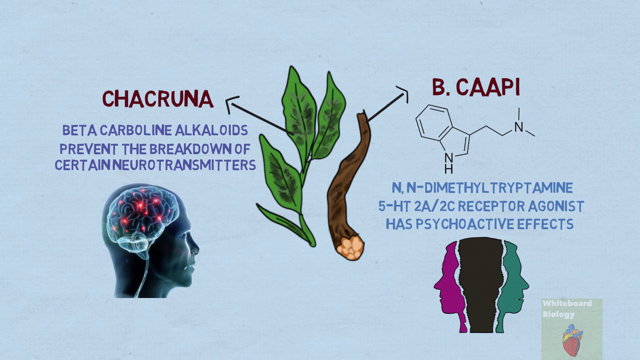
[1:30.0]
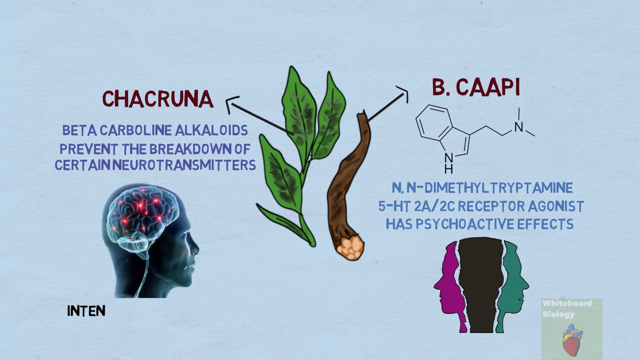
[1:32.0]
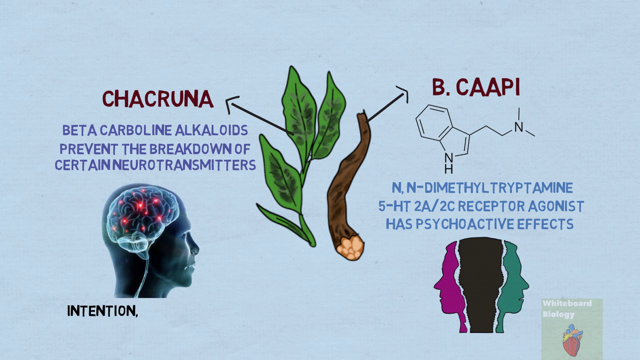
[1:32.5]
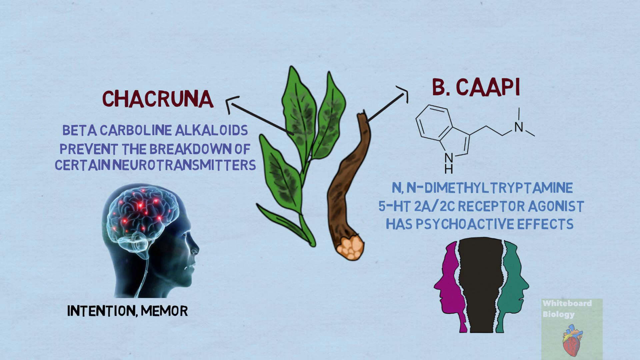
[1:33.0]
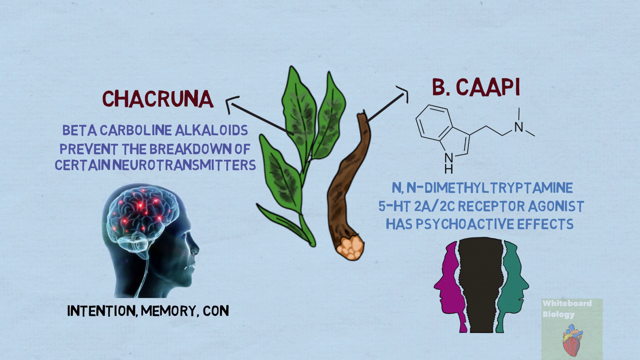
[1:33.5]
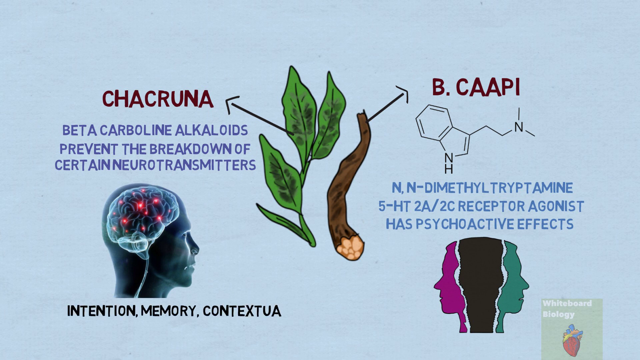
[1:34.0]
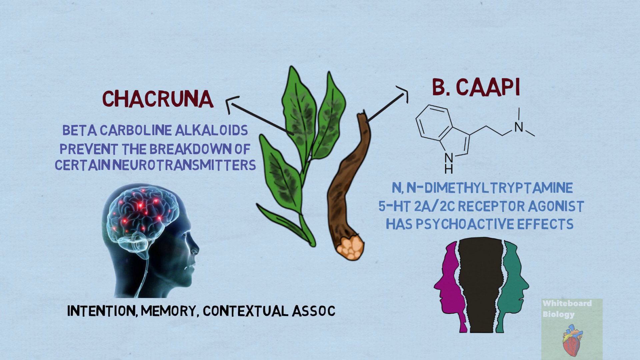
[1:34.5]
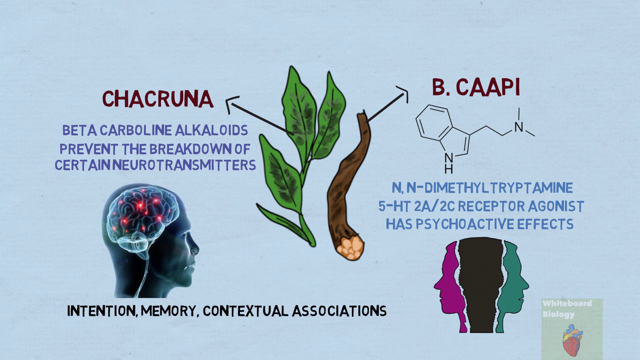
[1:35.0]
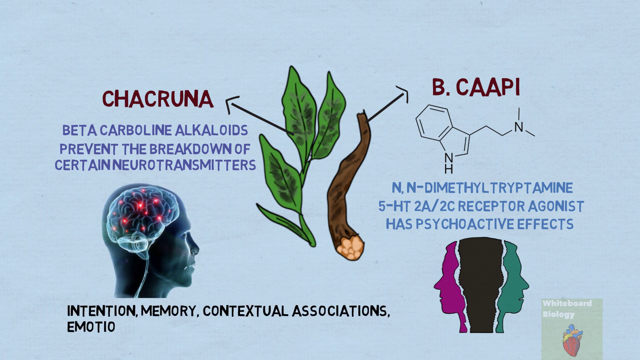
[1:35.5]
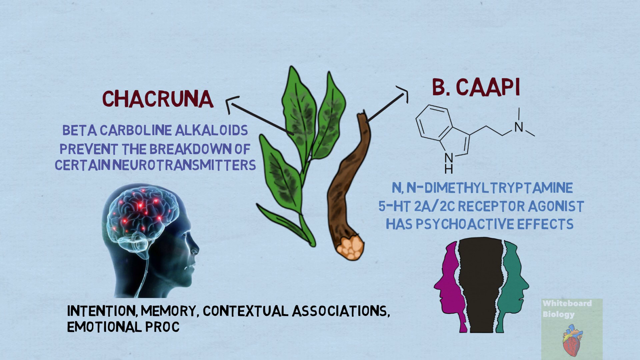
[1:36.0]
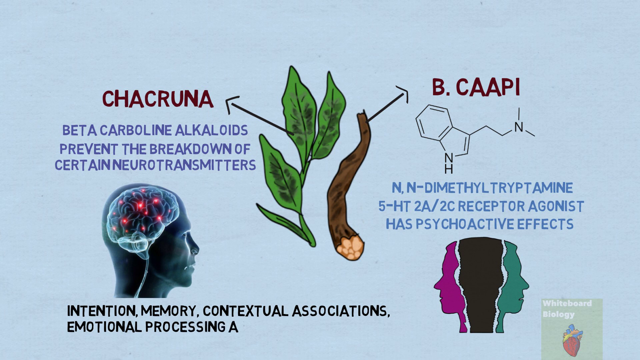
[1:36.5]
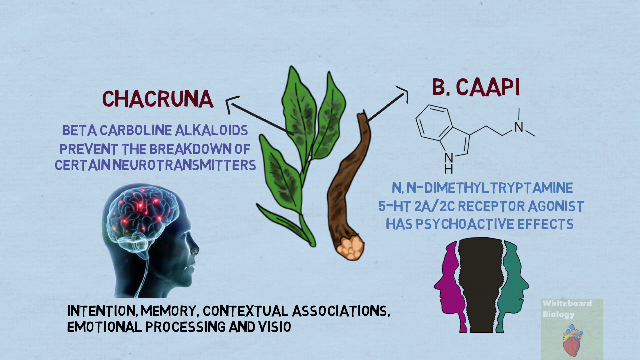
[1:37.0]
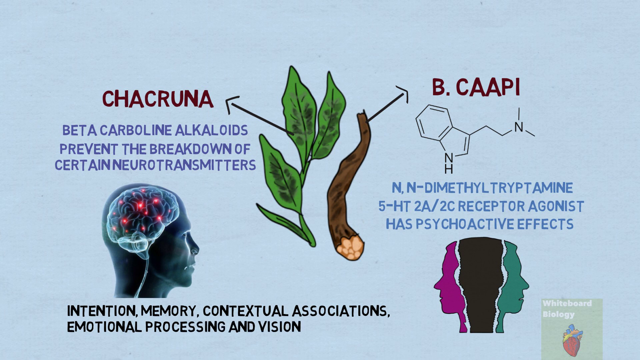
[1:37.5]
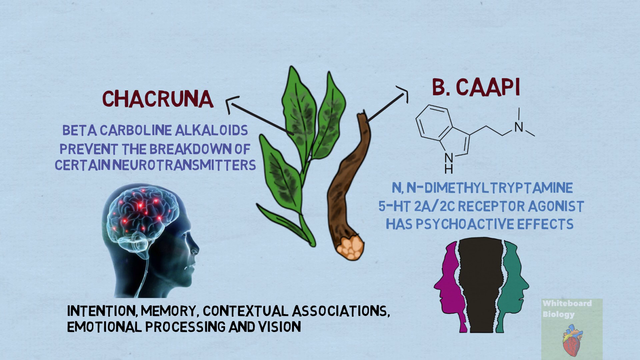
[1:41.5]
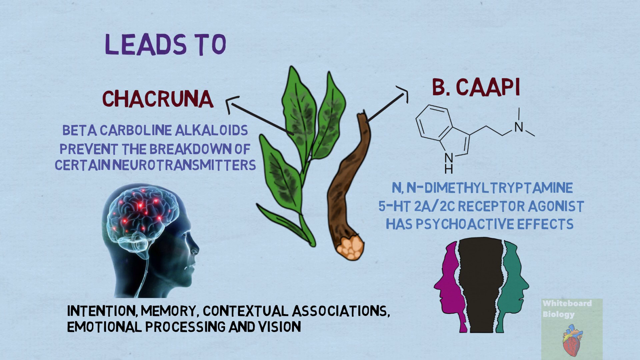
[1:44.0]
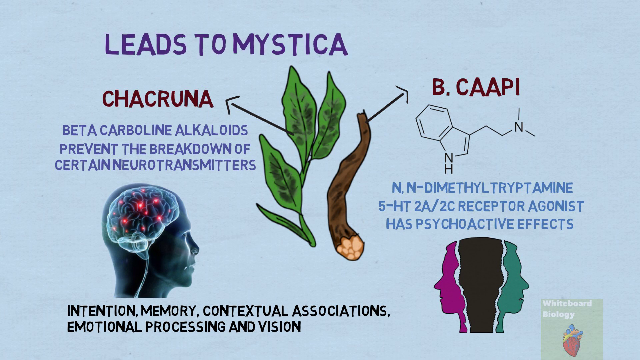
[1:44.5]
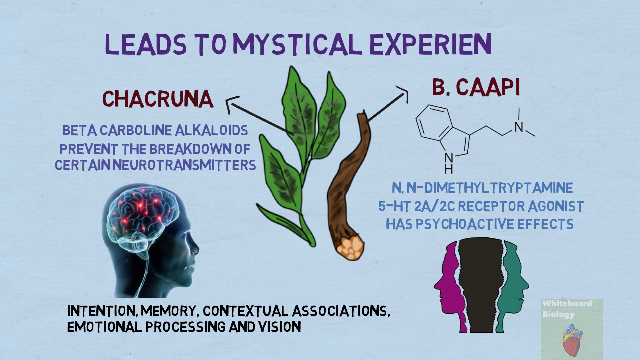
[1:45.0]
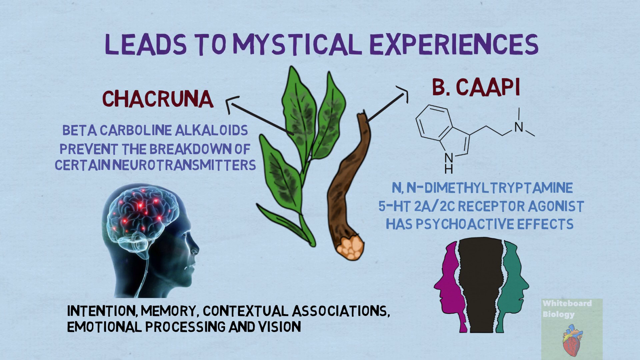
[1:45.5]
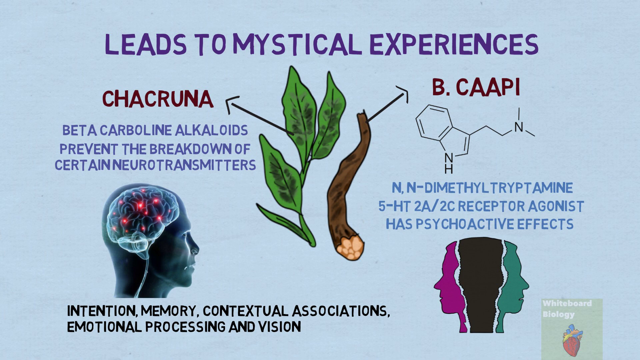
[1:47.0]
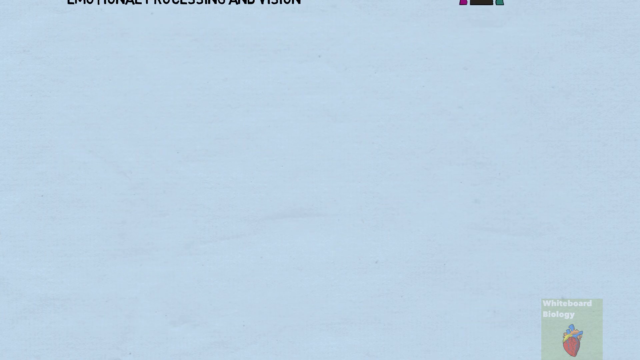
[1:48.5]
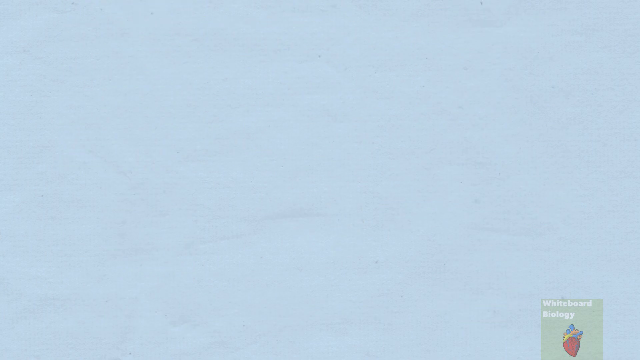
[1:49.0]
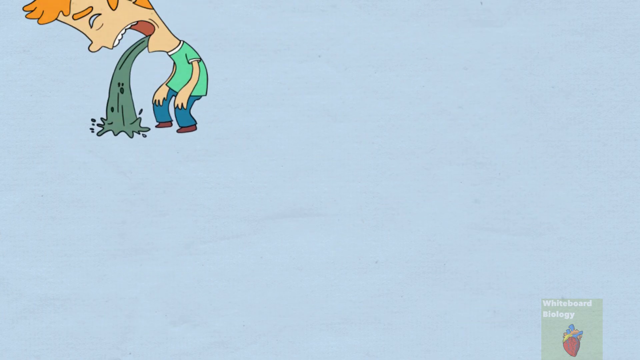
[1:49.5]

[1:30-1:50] An image of a human brain appears with a glow in it like a star, showing how the brain is connected. Text includes words such as "memory", "contextual association" and "emotional processing". A picture of someone then appears.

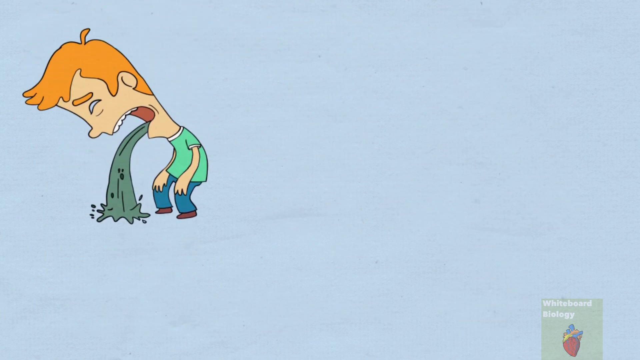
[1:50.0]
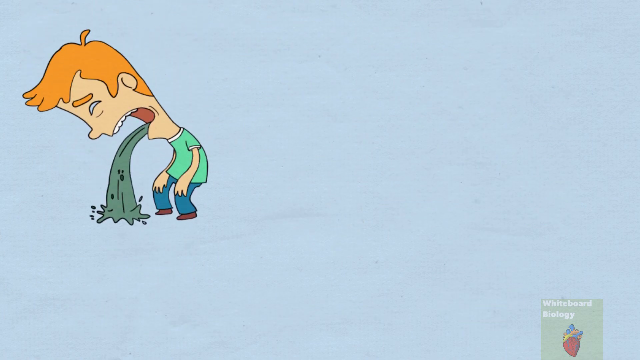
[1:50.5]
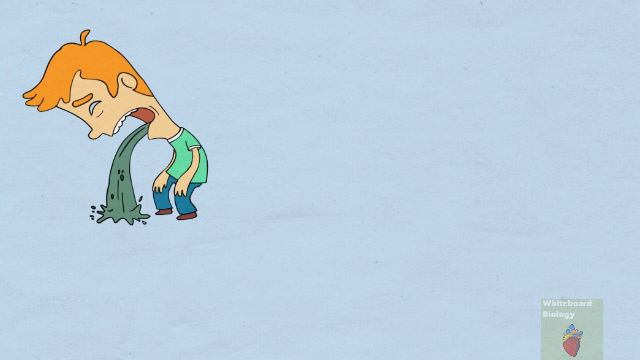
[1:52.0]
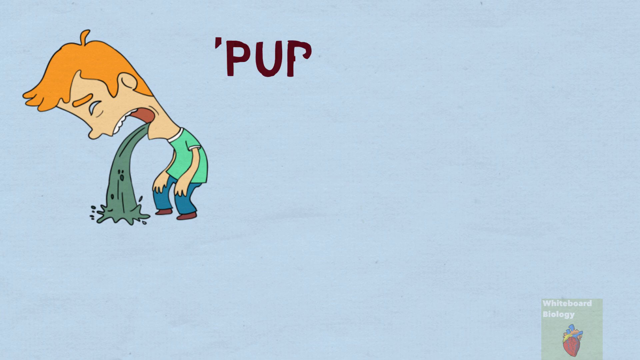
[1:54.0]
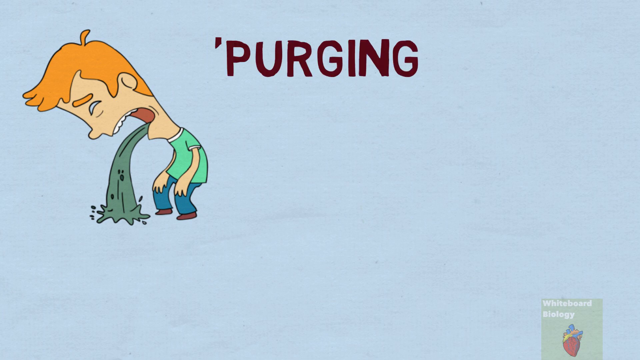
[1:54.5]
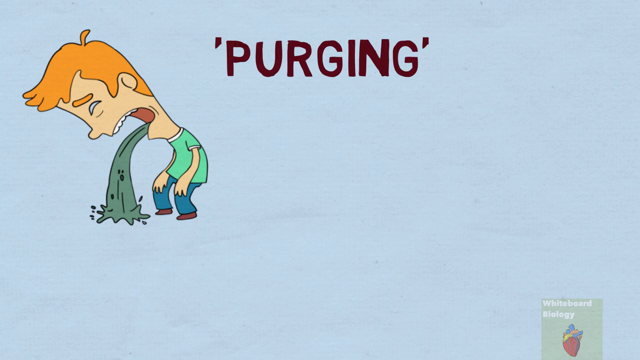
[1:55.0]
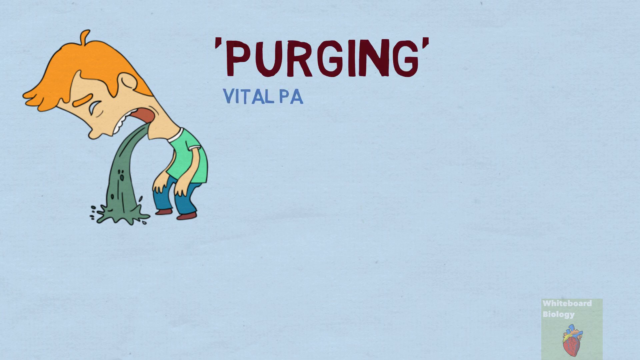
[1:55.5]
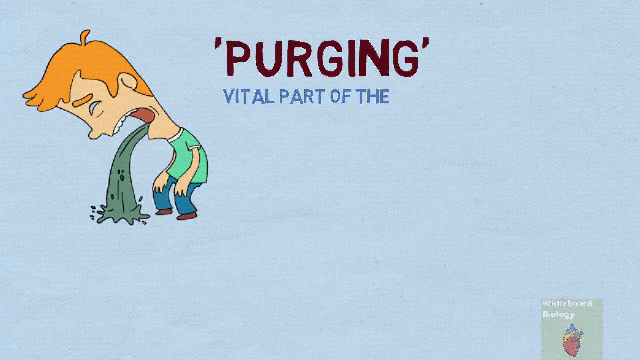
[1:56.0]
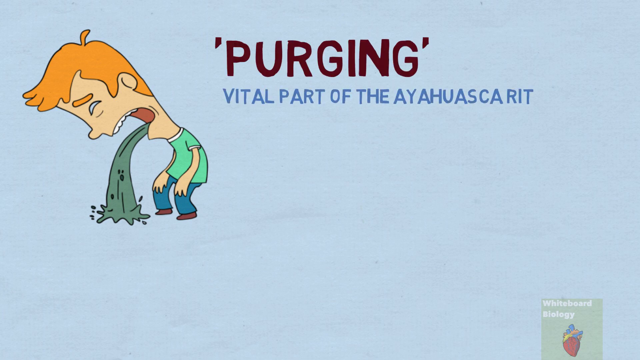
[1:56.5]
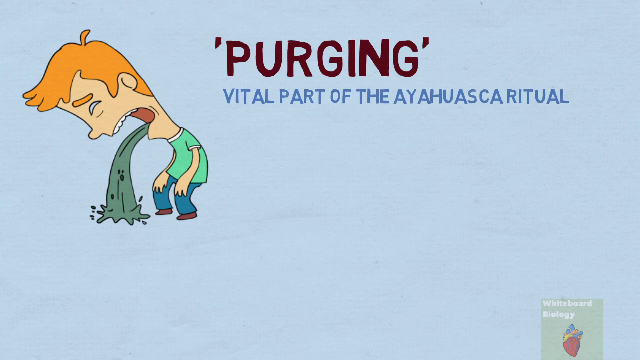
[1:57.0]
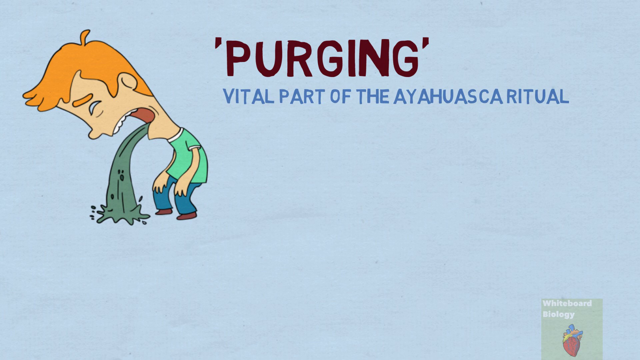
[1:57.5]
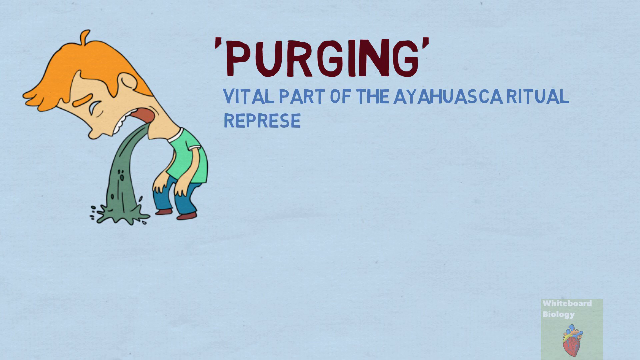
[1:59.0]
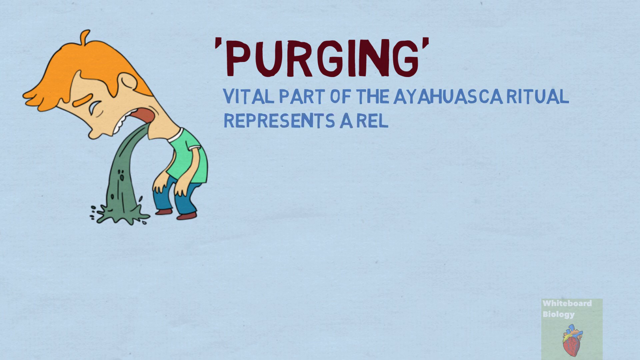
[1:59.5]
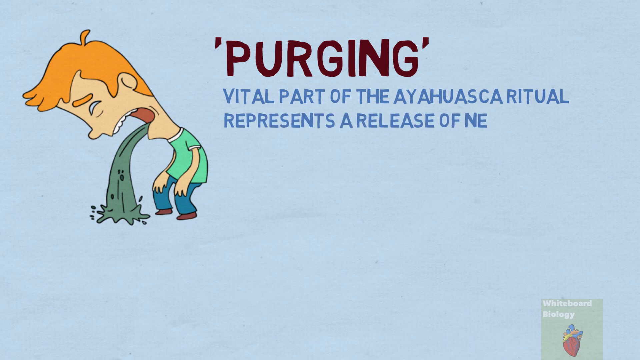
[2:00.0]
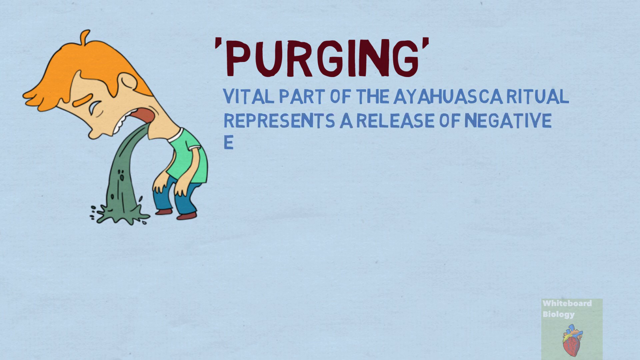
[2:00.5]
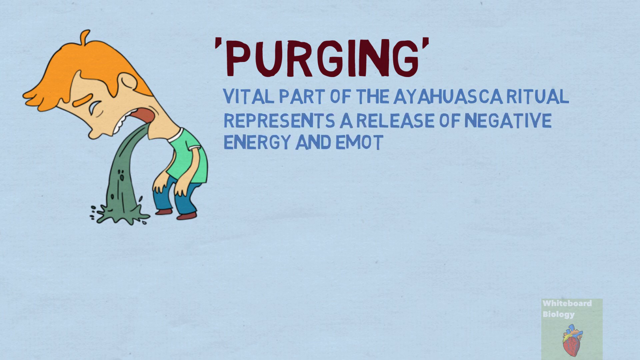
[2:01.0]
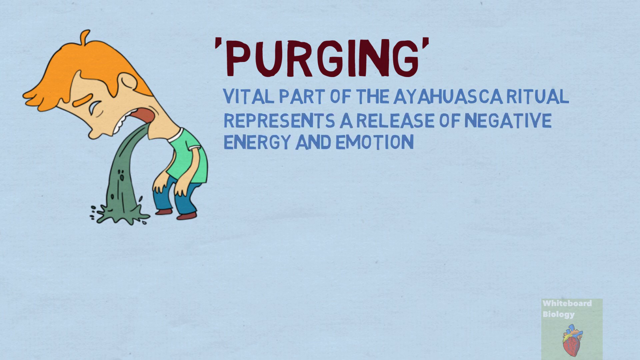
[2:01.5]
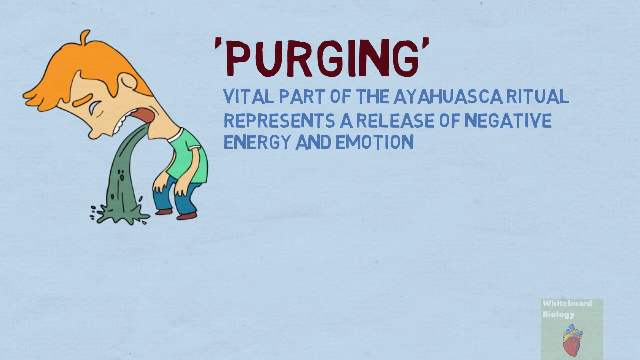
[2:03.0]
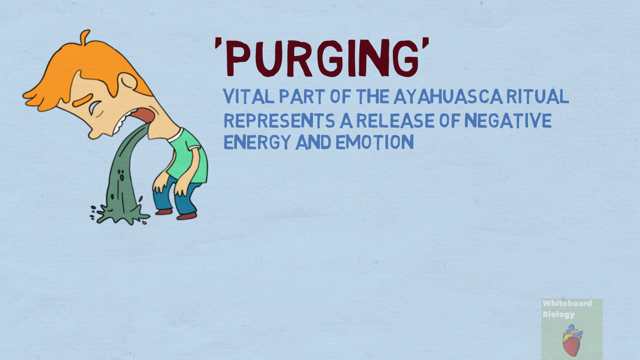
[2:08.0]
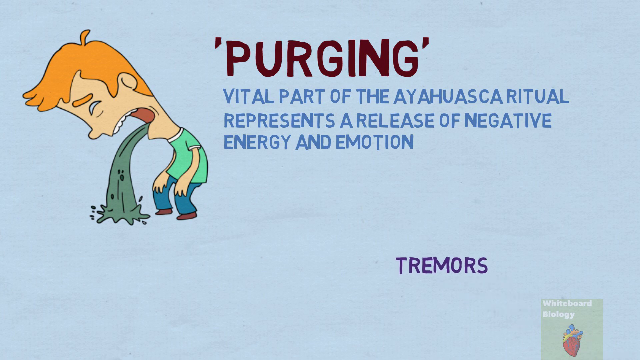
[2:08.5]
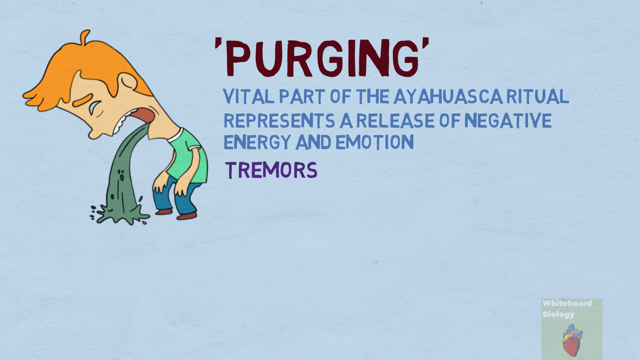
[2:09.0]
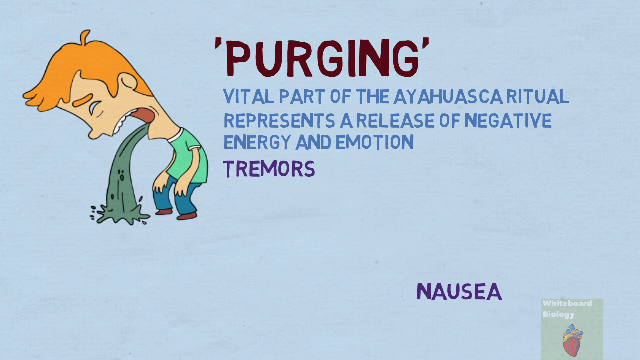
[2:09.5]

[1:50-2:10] A cartoon animation shows someone vomiting, with liquid flowing out of his mouth like a river.